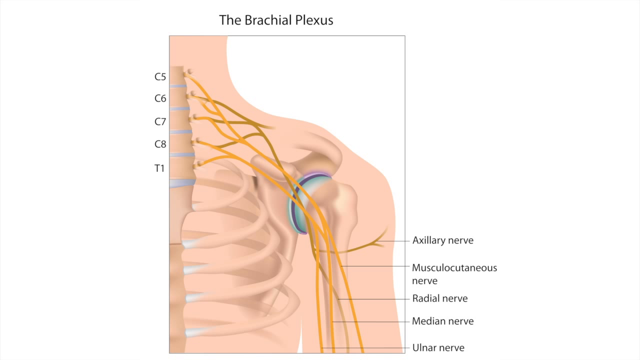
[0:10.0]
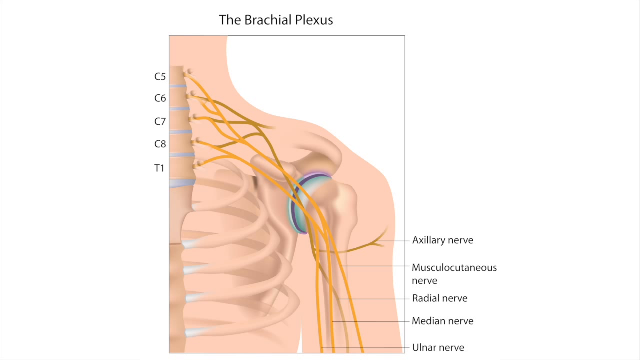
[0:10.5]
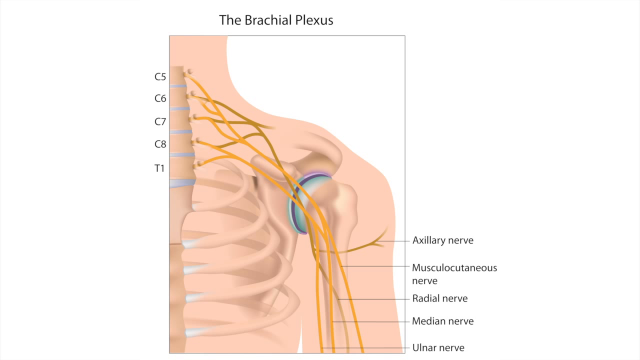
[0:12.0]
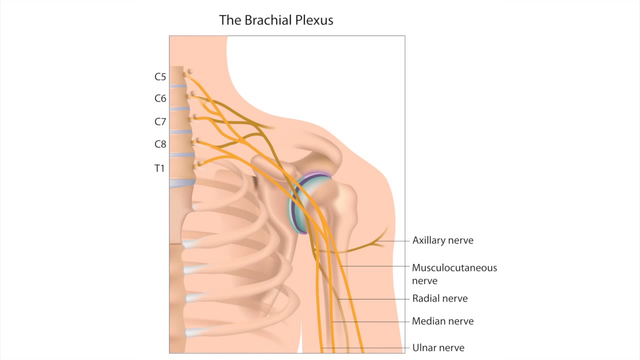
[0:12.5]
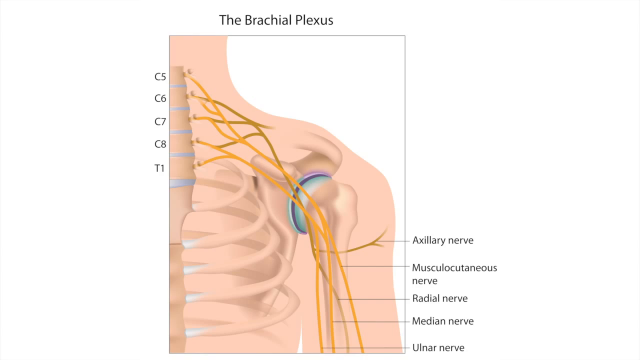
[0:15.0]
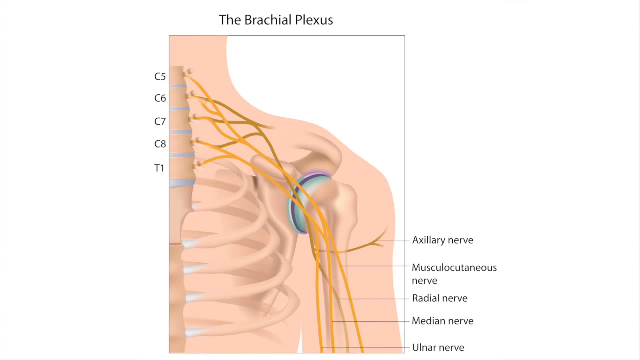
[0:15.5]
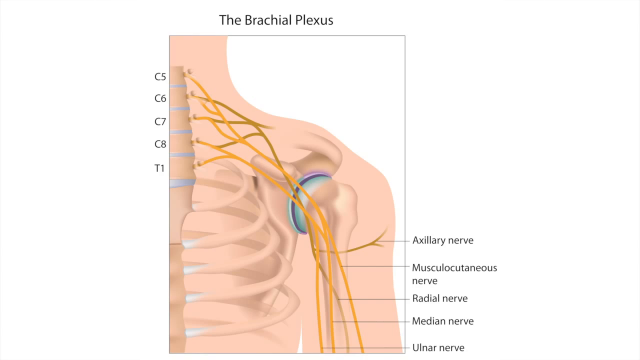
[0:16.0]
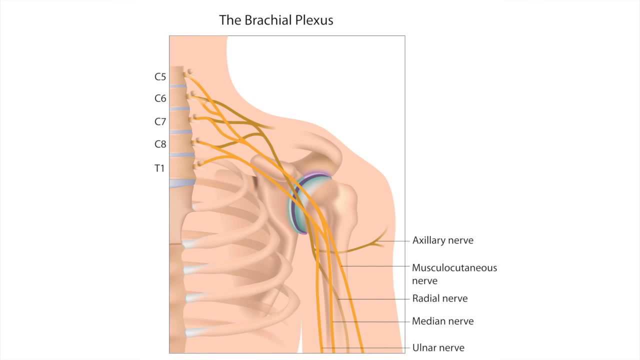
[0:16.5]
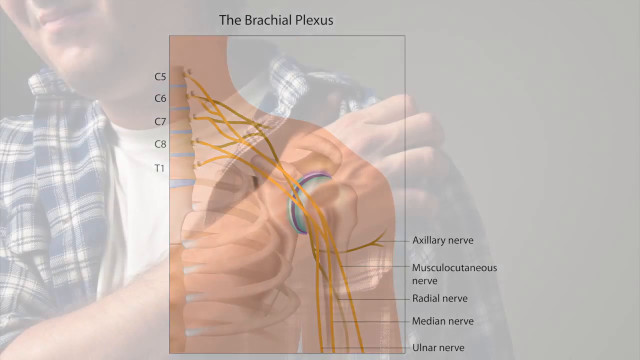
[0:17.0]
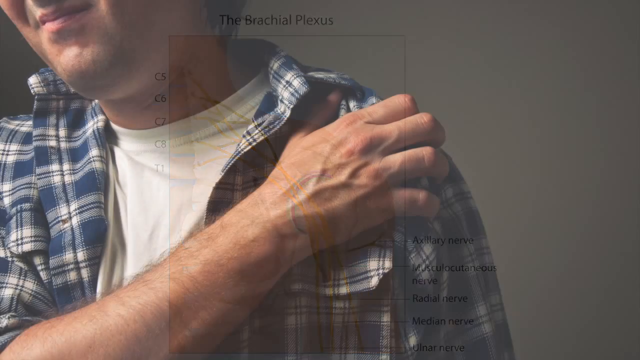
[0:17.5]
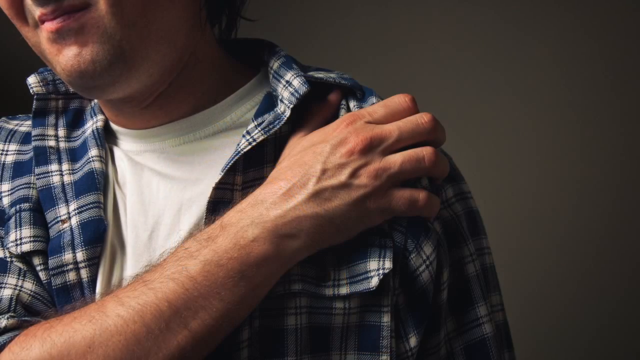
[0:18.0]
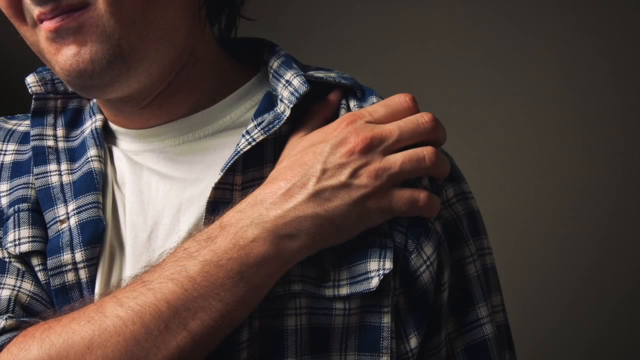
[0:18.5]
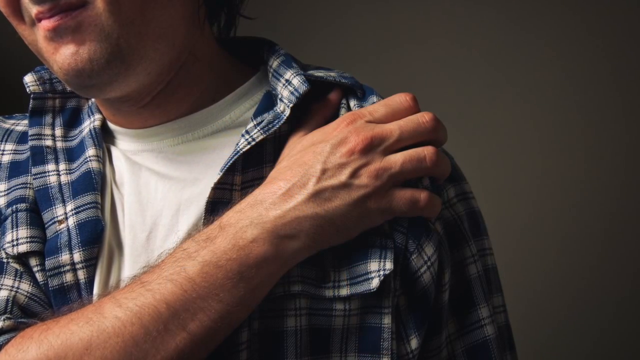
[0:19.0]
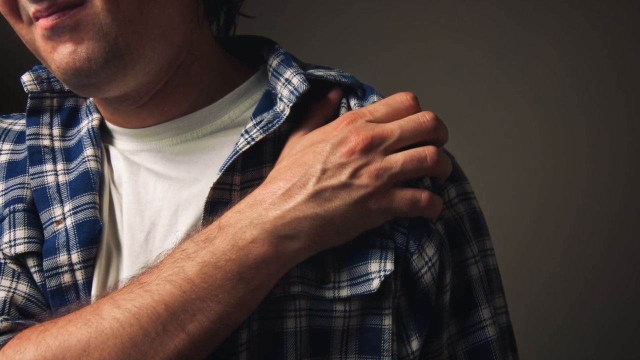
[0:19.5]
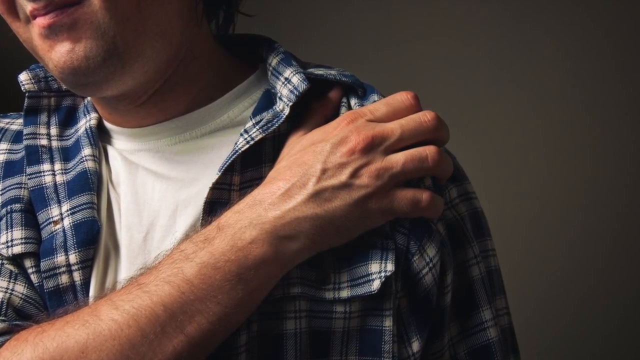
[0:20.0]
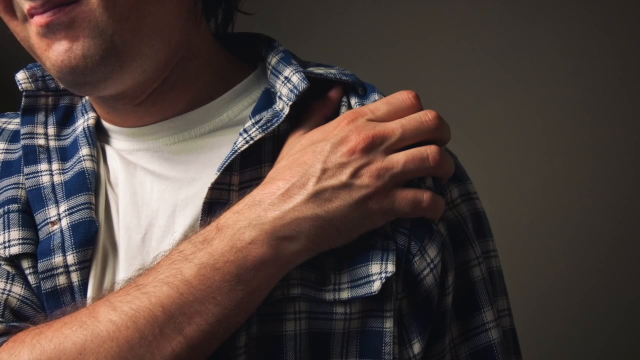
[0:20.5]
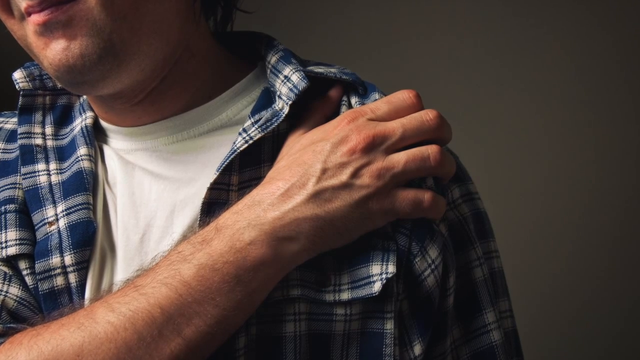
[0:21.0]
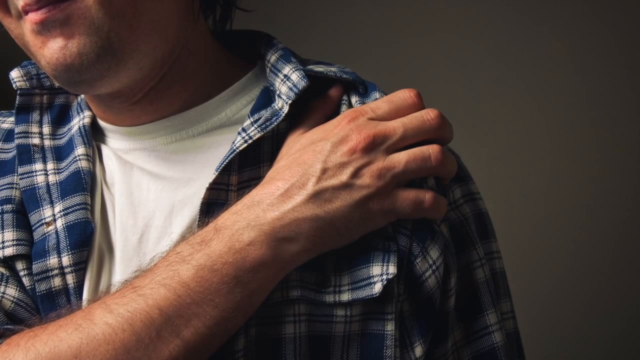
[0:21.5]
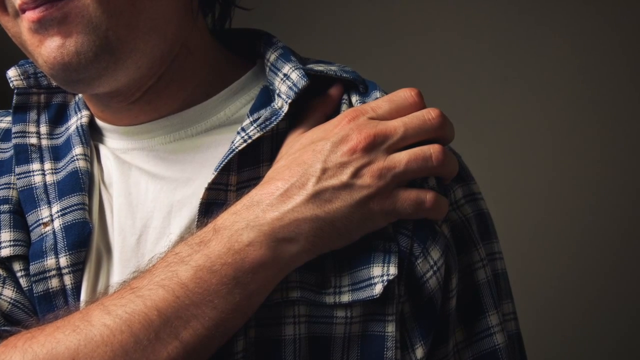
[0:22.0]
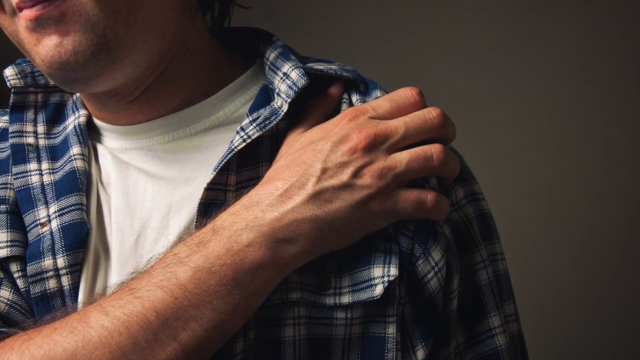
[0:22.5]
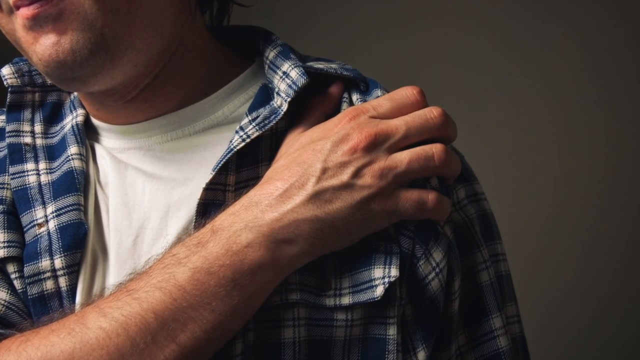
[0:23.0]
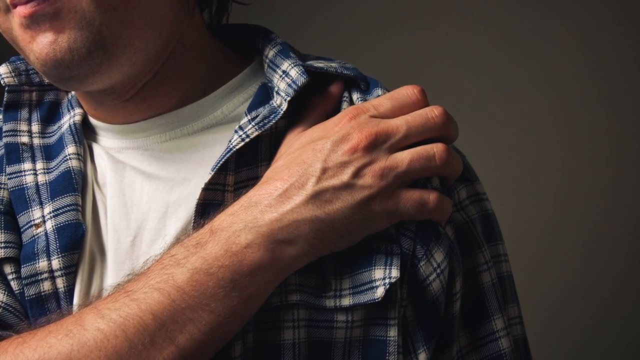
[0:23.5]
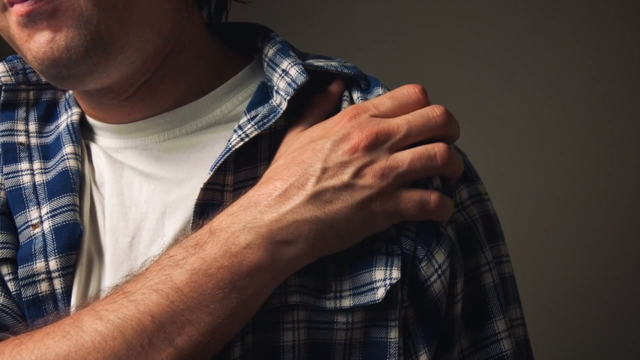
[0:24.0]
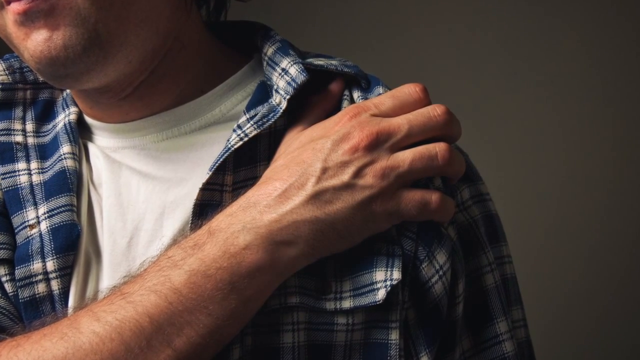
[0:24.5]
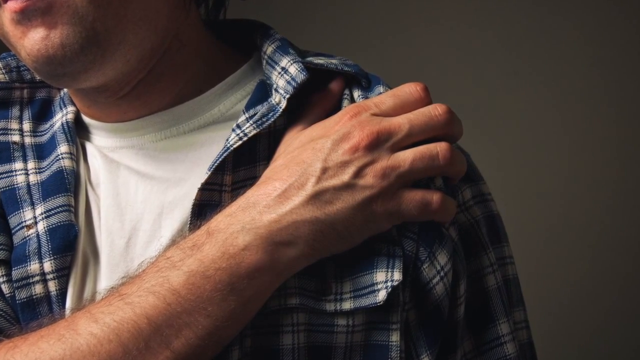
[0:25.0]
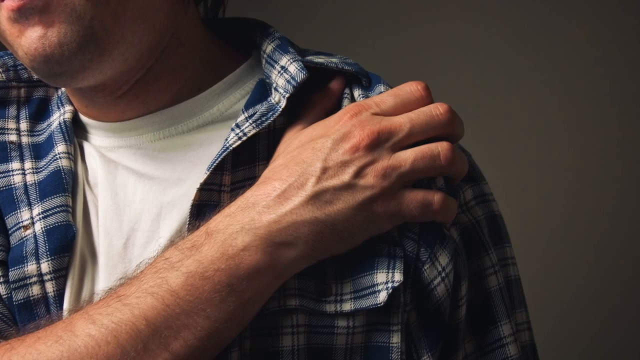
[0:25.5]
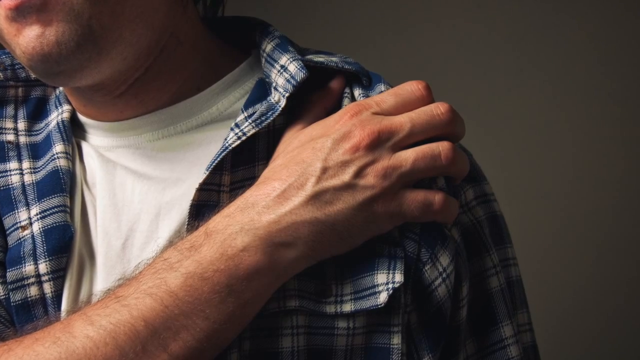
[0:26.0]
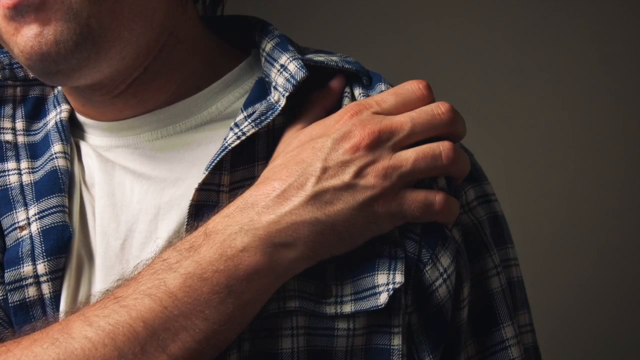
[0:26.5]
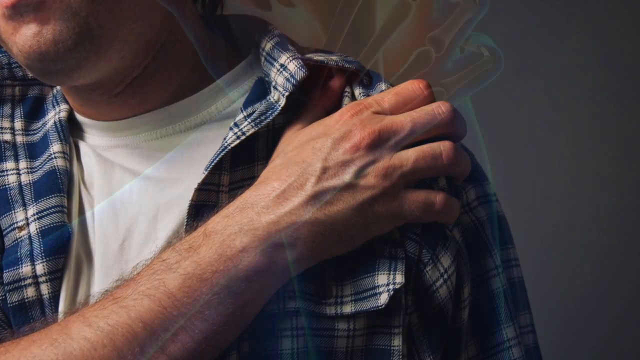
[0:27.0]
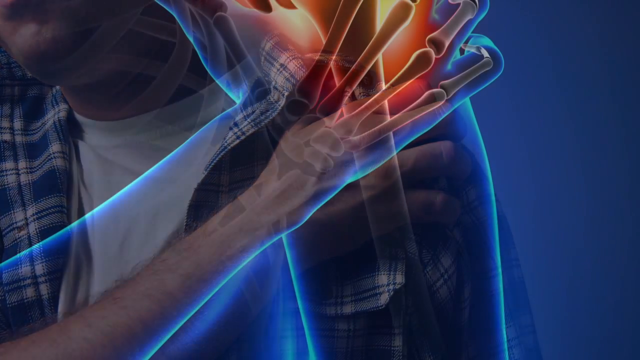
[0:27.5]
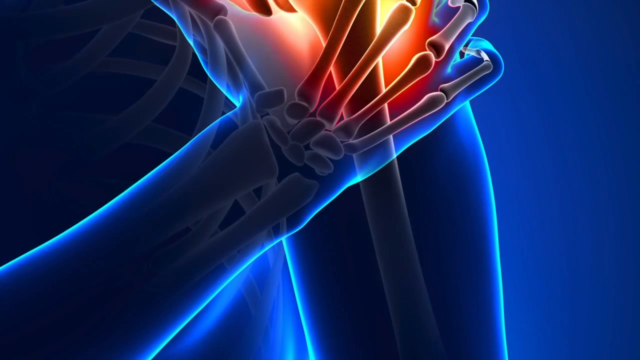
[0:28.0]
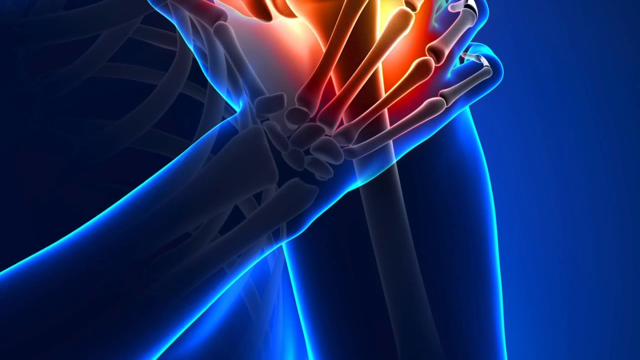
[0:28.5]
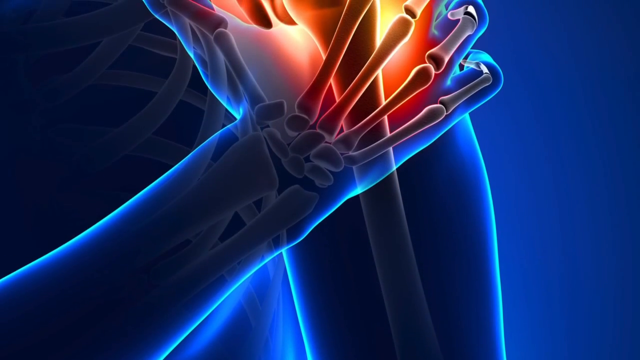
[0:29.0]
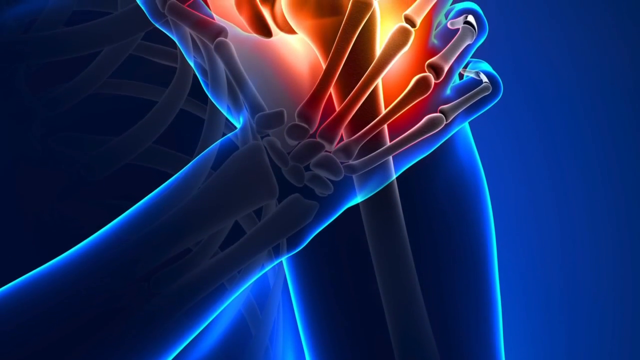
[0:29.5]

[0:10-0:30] Against a white background, the inner workings of a body are shown, apparently the shoulder area. Text up top says "The Brachial Plexus," and different areas of the arm are labeled on the screen. The video then shows what looks to be someone holding their shoulder, possibly in pain, and zooms in to where the person is holding their shoulder. Next is a different, more brightly colored image in blues, reds and orange that looks like a skeletal system, with the hand holding on to the shoulder area. Bright lights are on in the area around where the hand is placed, and the red and orange areas are on the shoulder.